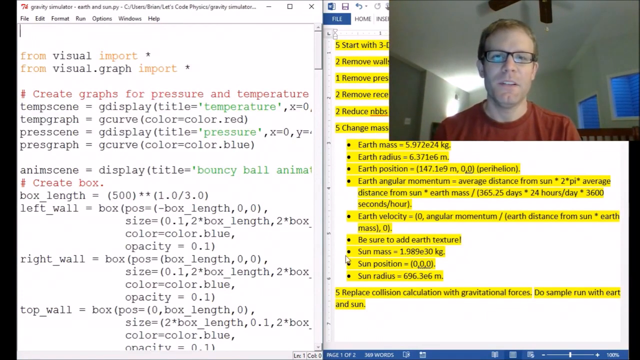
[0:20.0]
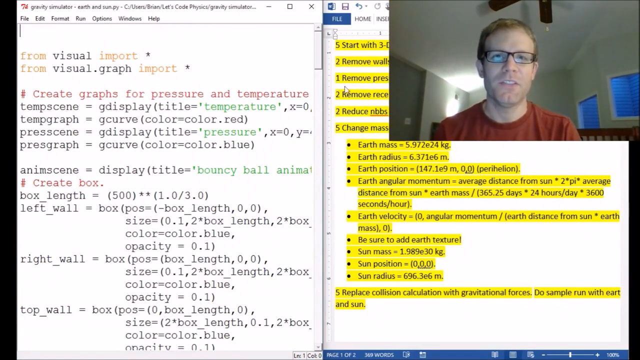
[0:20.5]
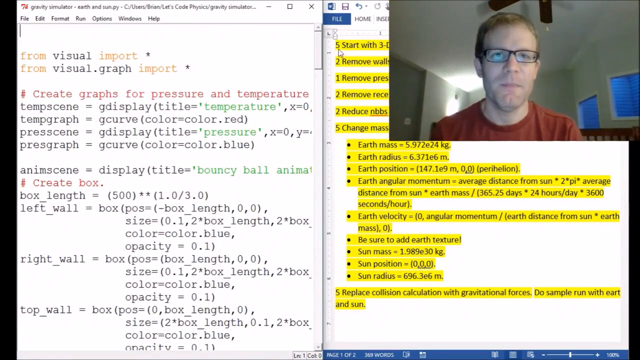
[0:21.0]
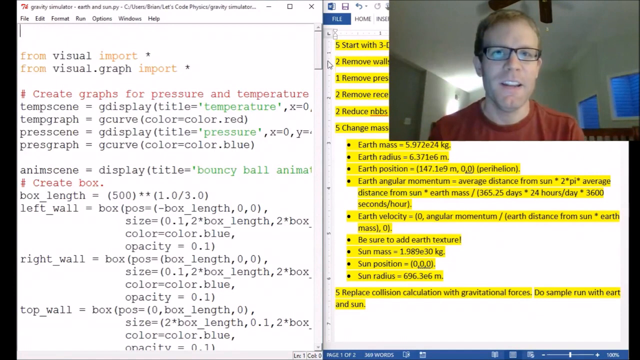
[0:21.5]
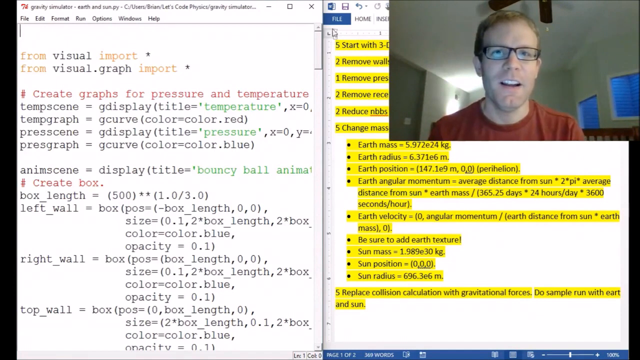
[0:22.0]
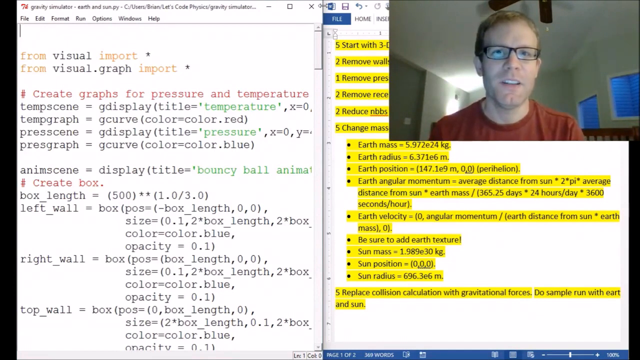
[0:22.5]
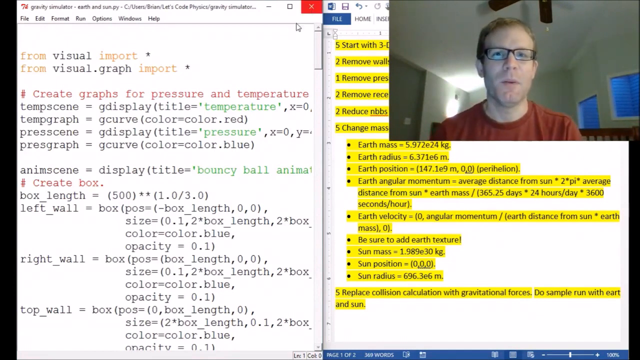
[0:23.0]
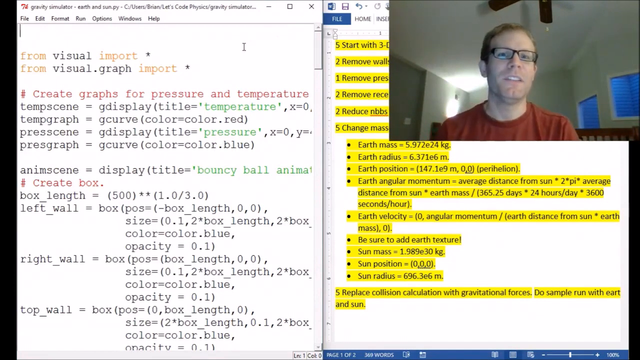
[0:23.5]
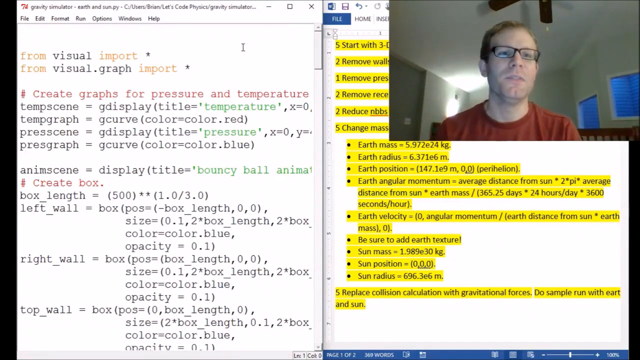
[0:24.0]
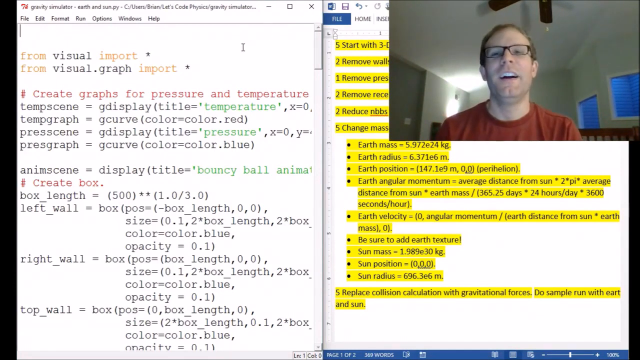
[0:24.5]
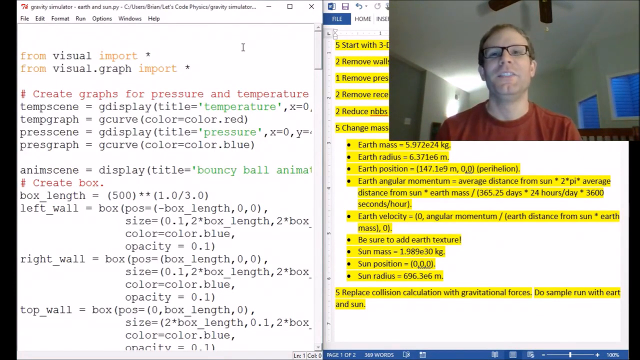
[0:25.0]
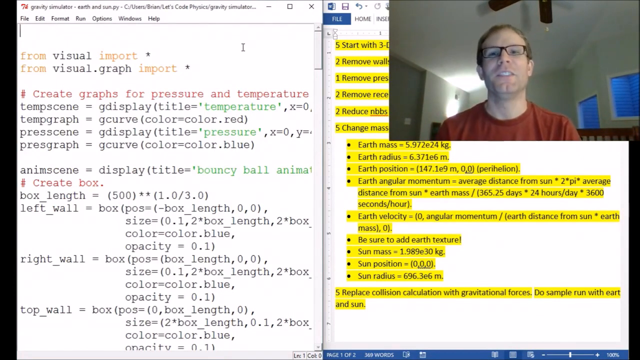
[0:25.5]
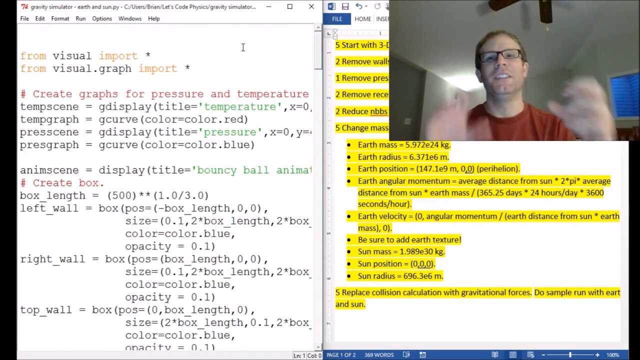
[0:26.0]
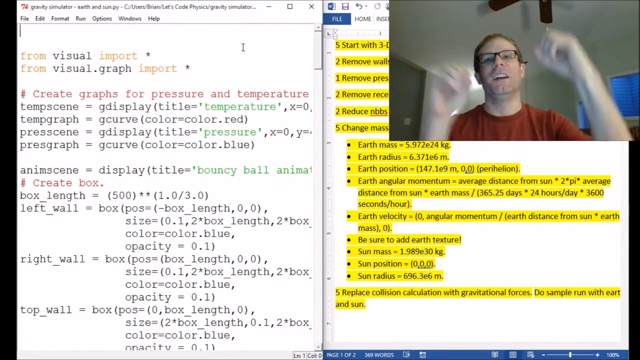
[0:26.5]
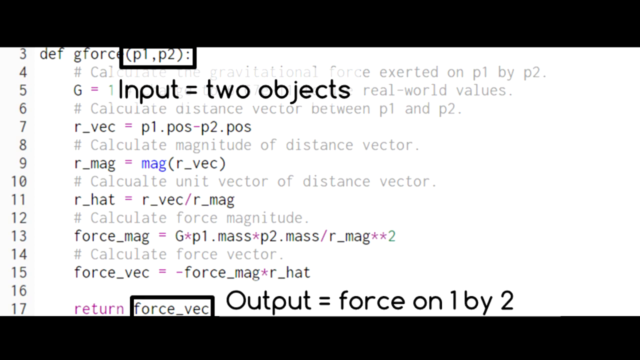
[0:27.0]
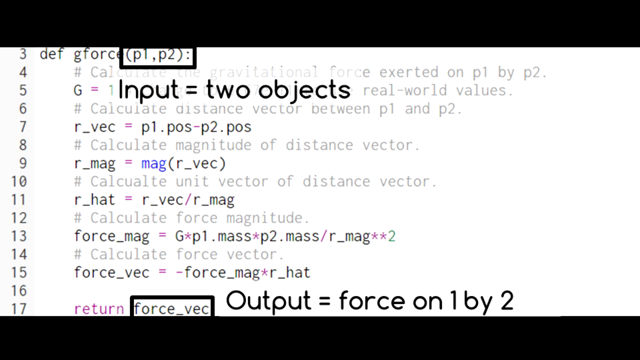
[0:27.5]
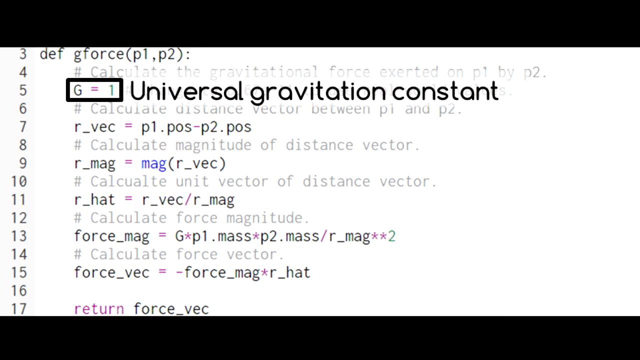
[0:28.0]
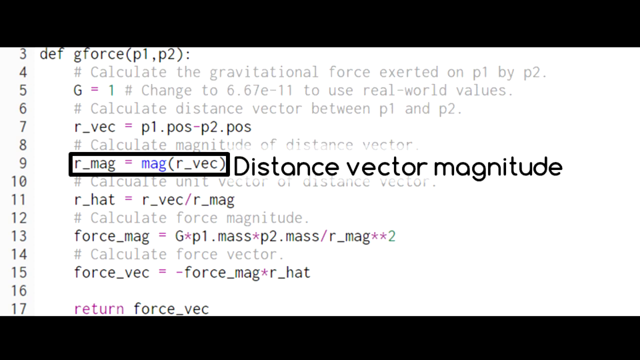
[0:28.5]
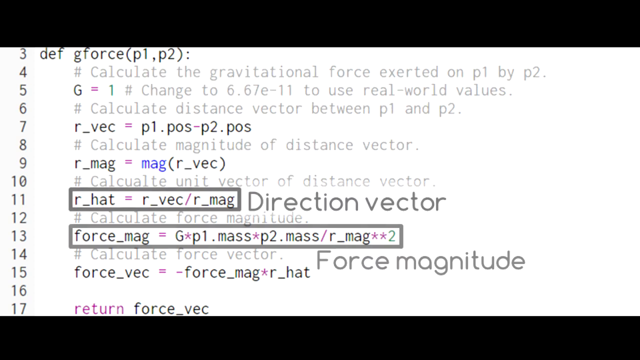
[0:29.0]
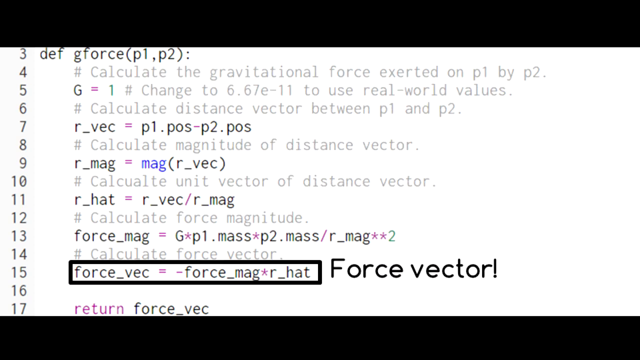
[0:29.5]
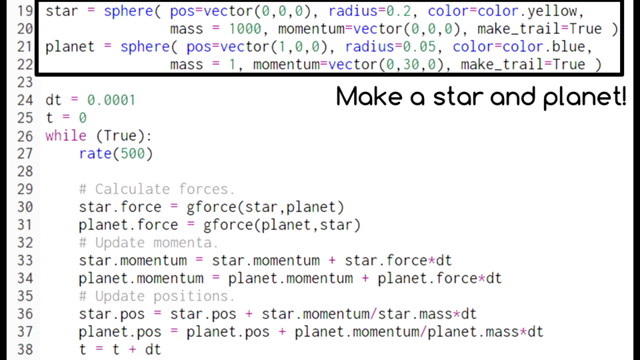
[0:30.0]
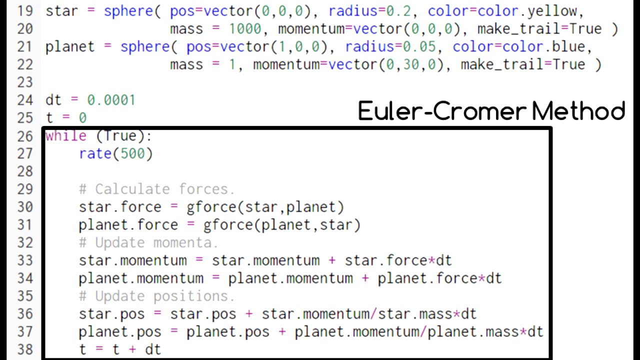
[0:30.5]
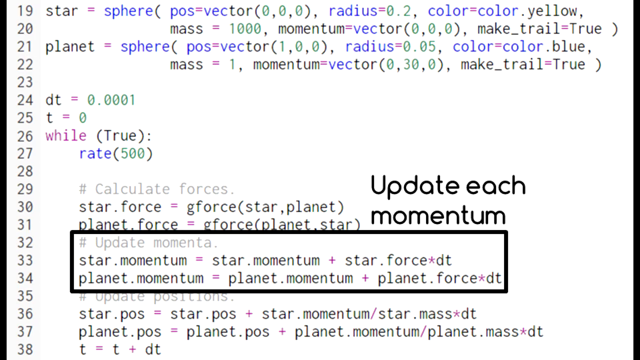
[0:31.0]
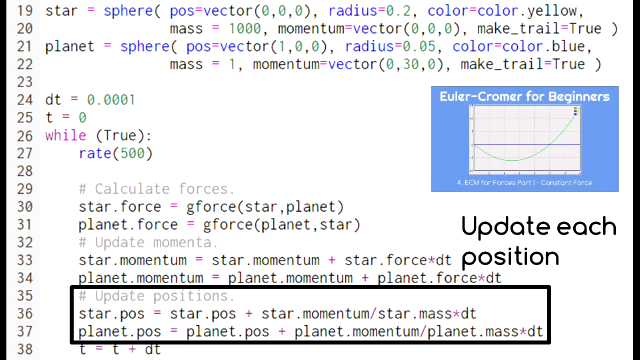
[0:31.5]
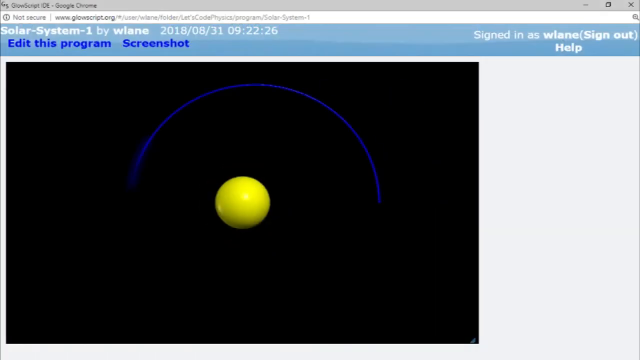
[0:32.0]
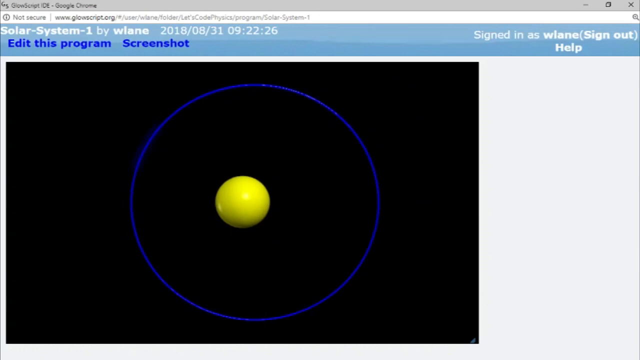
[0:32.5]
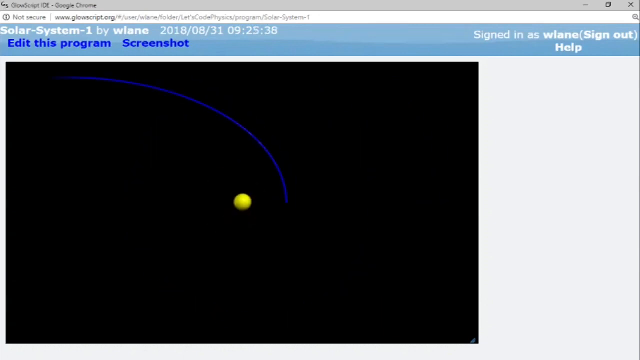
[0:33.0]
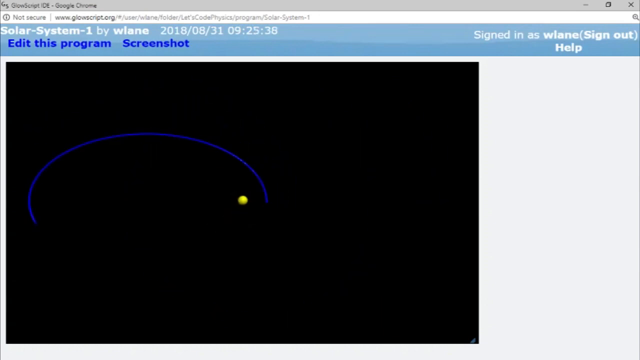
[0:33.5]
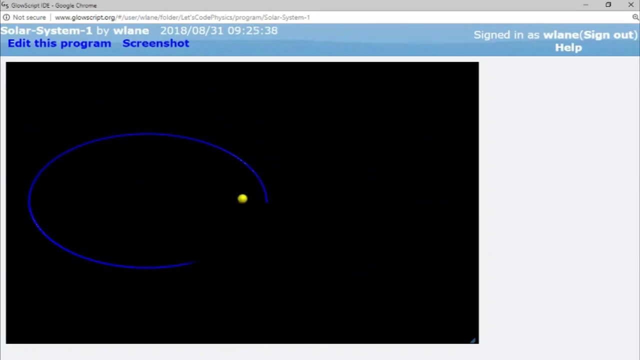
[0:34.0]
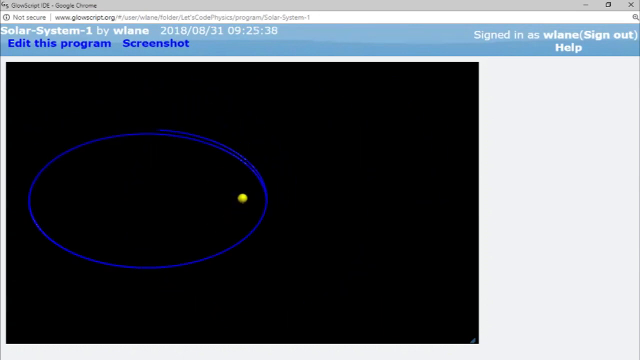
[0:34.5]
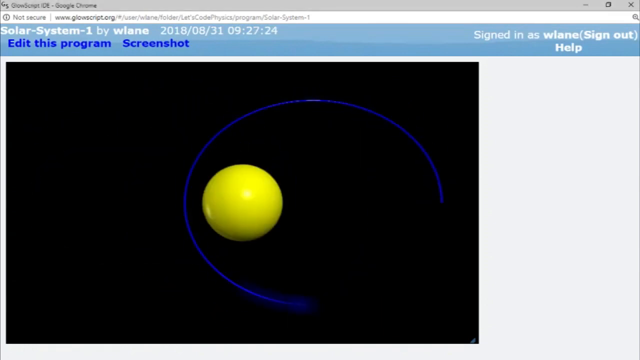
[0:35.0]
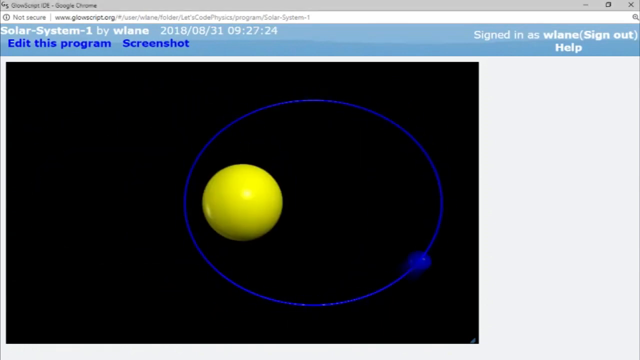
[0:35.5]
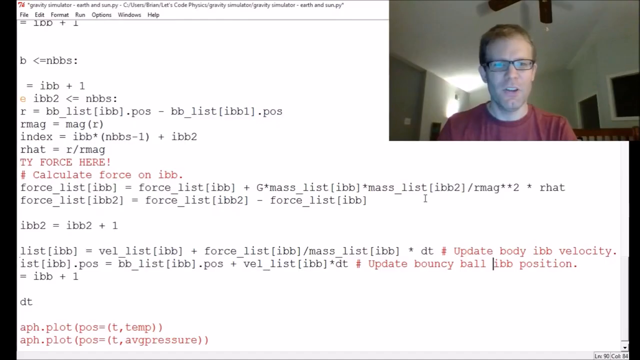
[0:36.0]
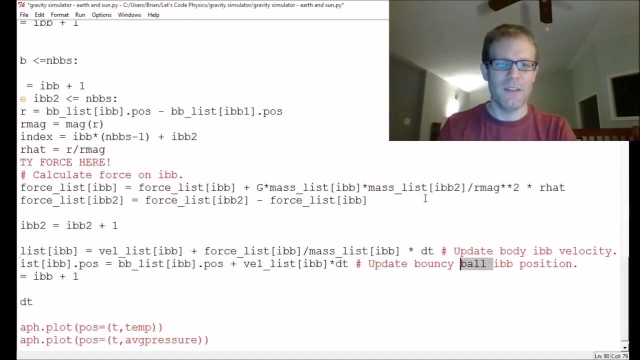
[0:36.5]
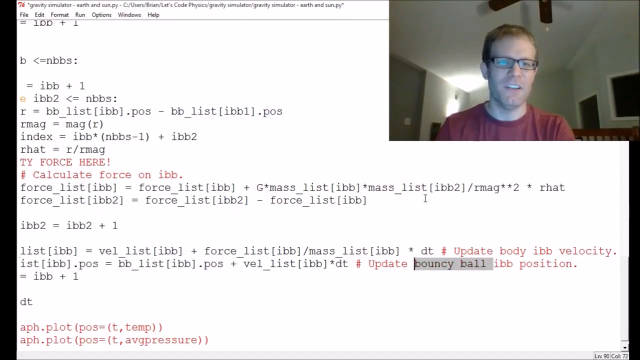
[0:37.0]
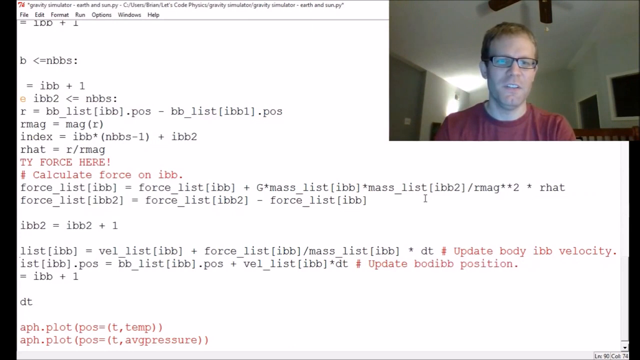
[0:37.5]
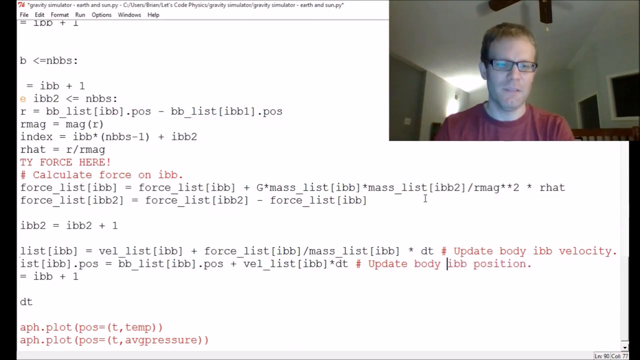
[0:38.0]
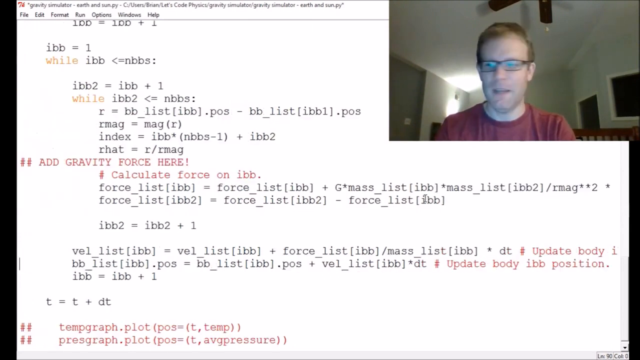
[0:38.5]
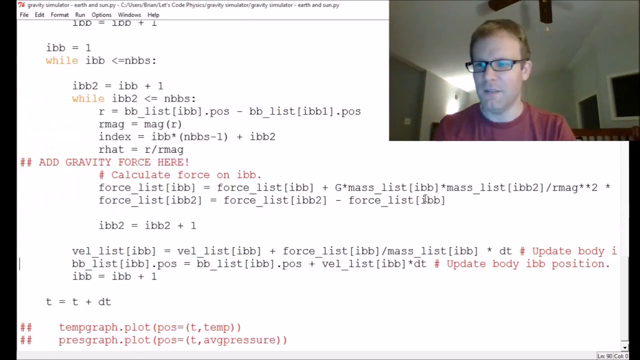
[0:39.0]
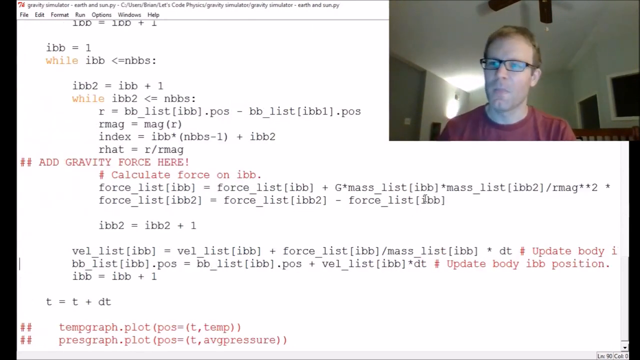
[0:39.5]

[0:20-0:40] A man is making a recording, possibly at his home, with his webcam image in the right-hand corner of the screen. He appears to be a Caucasian man with glasses and a red shirt. A page of code is shown, and then another page of code. Line 3 includes "GeForce" followed by "p1, p2" in parentheses; line 5 appears to read "input equals to objects", and line 17 begins with "return". He scrolls through the lines, of which there are at least 17. He then moves to another page running from line 19 to line 38, focusing on lines 26 to 38, which are enclosed in a box labeled with a method name. He then seems to start the program, and it runs, showing a blue circle with a yellow dot in it, apparently the Sun, with the blue circle seemingly the Earth orbiting the Sun.